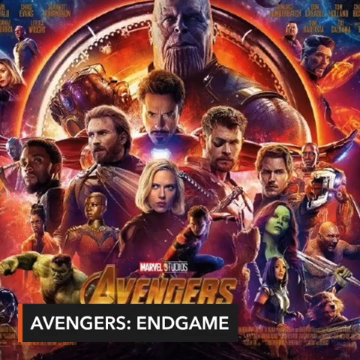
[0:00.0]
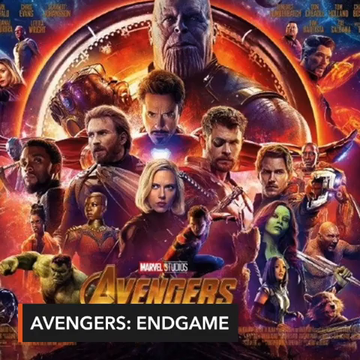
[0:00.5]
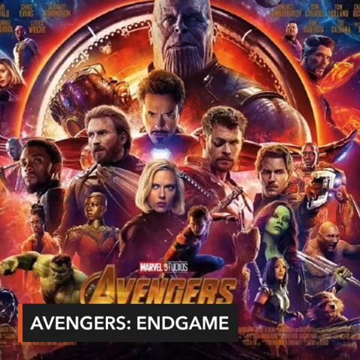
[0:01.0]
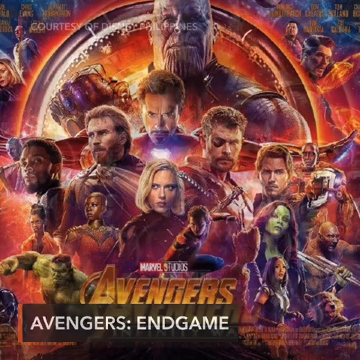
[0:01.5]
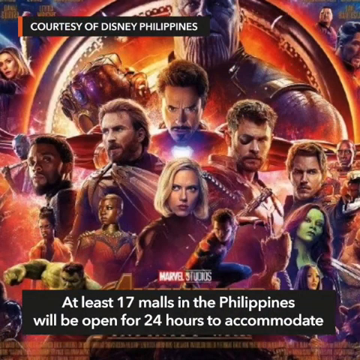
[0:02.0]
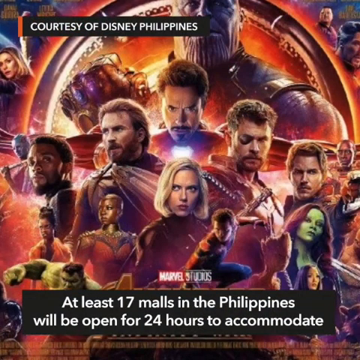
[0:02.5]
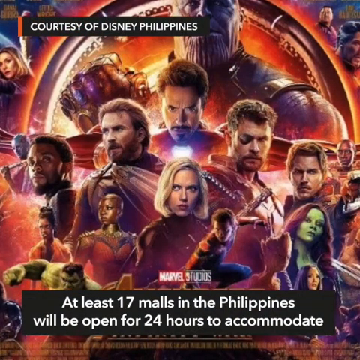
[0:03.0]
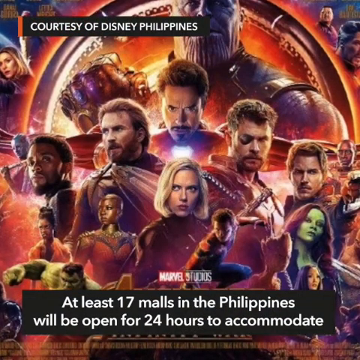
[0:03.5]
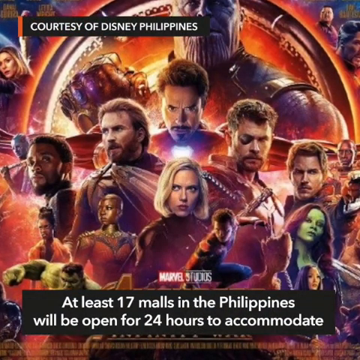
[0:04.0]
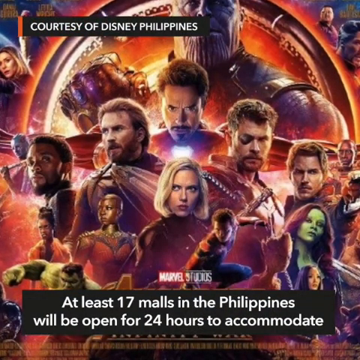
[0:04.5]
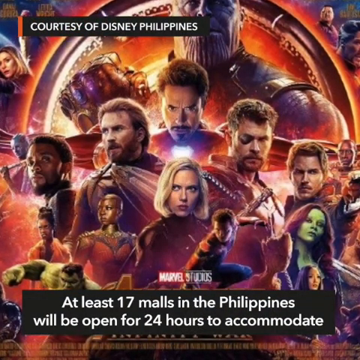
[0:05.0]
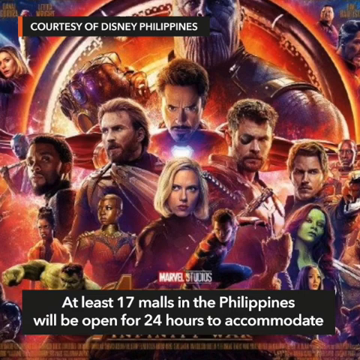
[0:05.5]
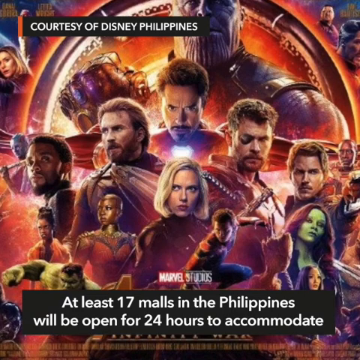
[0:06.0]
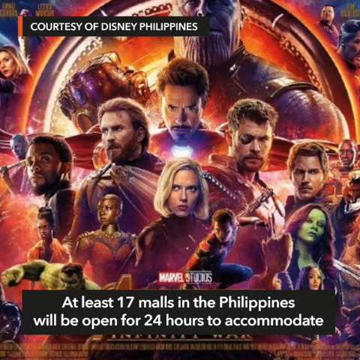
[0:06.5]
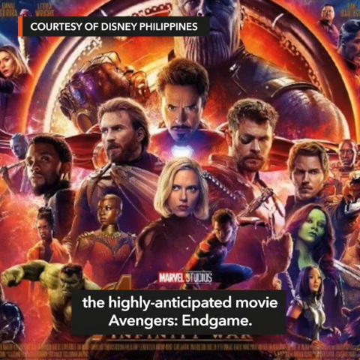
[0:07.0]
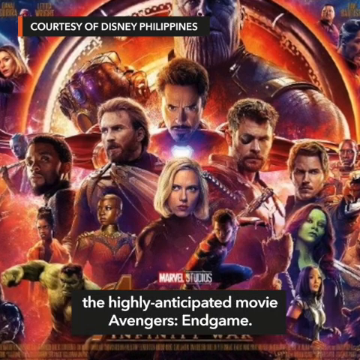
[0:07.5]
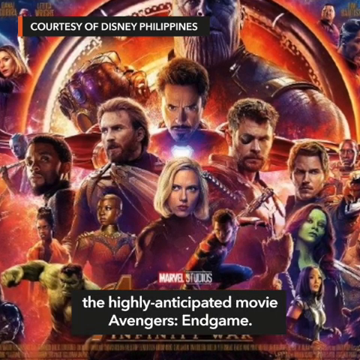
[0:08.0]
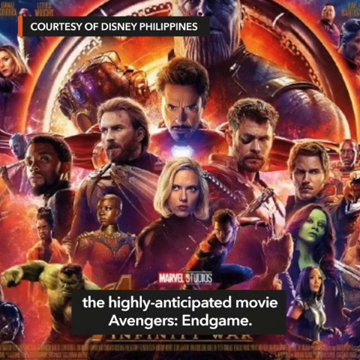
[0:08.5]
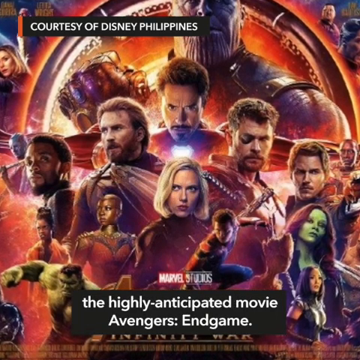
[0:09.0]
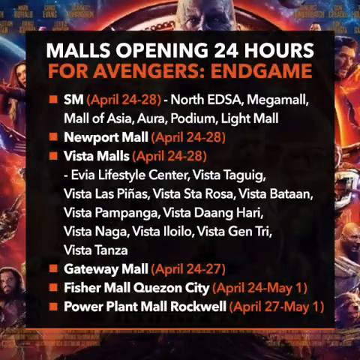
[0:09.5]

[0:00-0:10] The video opens with a screenshot of a movie poster for Avengers Endgame. The poster shows several of the Avengers characters from Marvel, around 20 or so characters in all. Subtitles appear: the first gives the name of the movie, "Avengers: Endgame," and the next states that at least 17 malls in the Philippines will be open for 24 hours to accommodate the highly anticipated movie. The segment ends with a screenshot of a few of the malls that will be open for the movie.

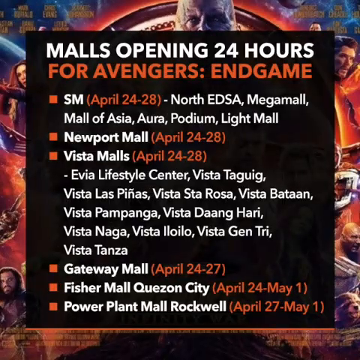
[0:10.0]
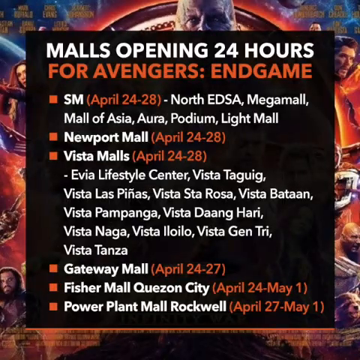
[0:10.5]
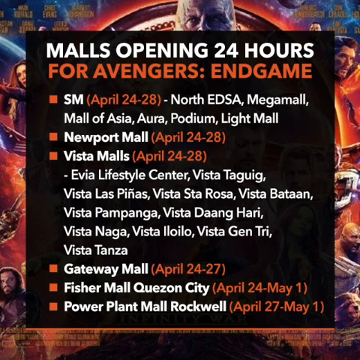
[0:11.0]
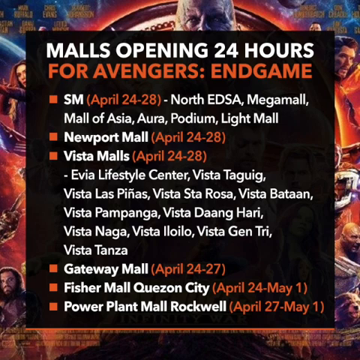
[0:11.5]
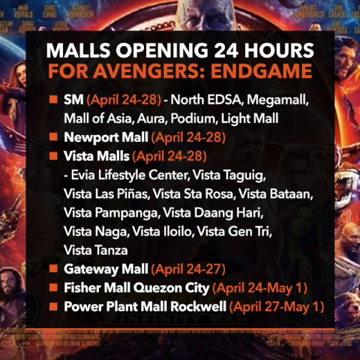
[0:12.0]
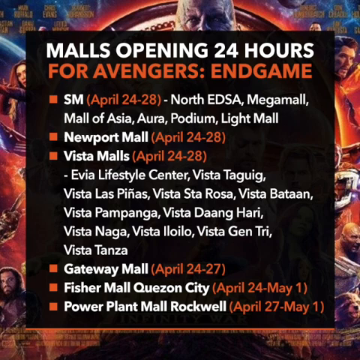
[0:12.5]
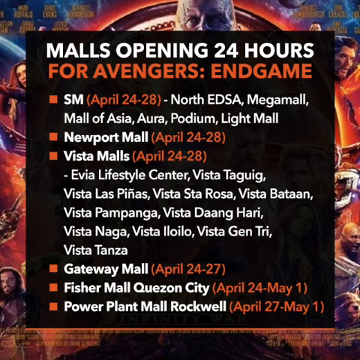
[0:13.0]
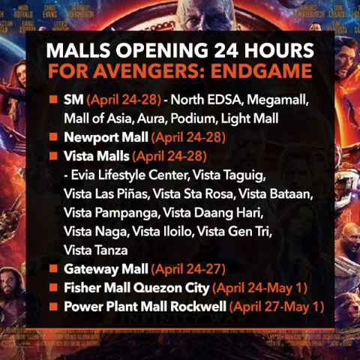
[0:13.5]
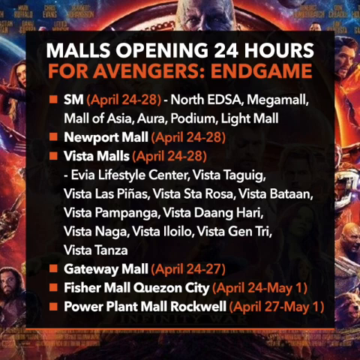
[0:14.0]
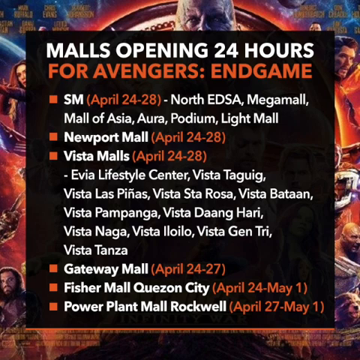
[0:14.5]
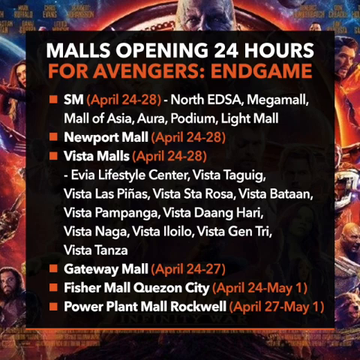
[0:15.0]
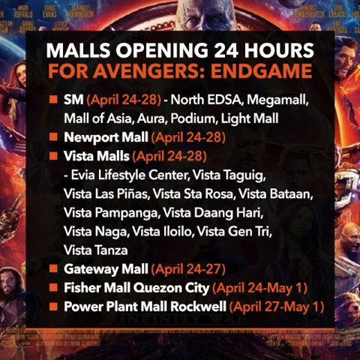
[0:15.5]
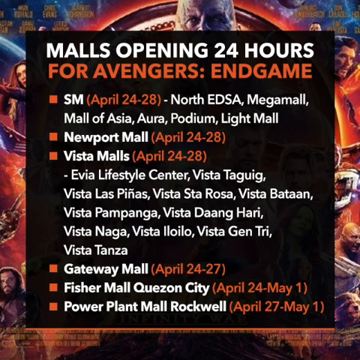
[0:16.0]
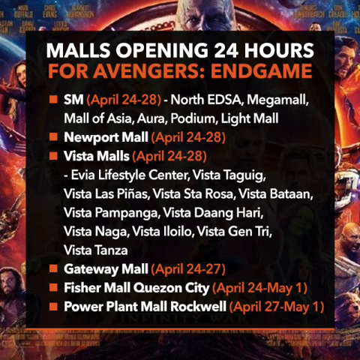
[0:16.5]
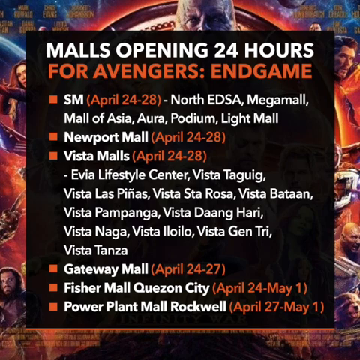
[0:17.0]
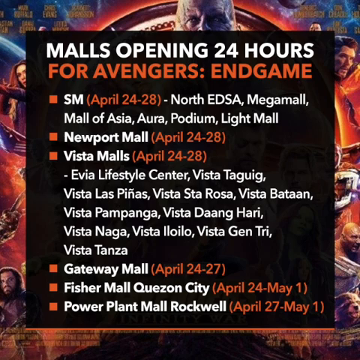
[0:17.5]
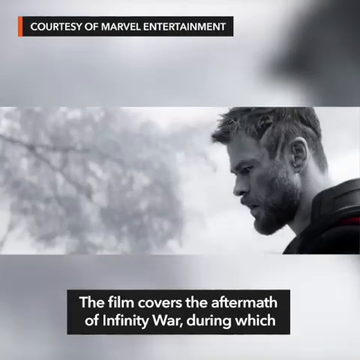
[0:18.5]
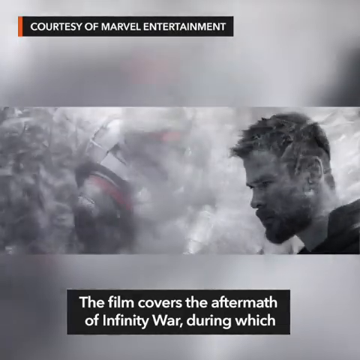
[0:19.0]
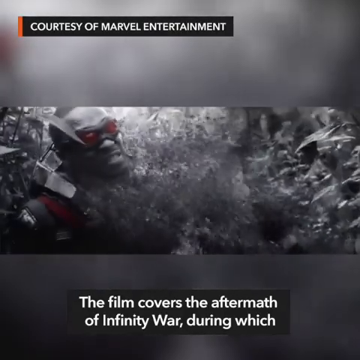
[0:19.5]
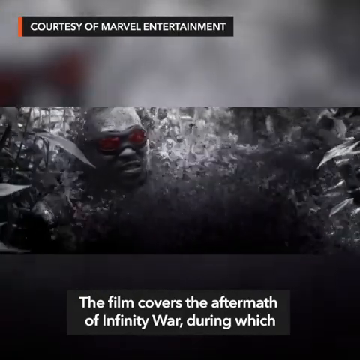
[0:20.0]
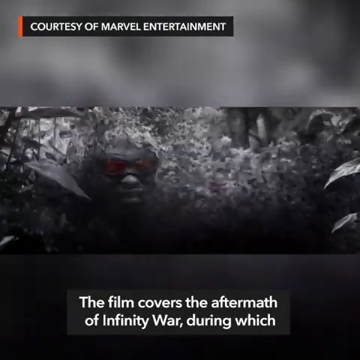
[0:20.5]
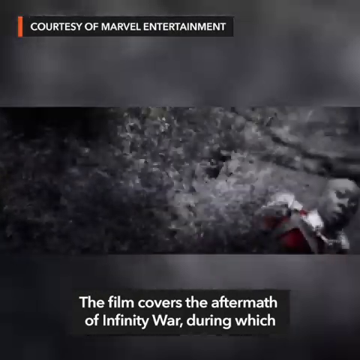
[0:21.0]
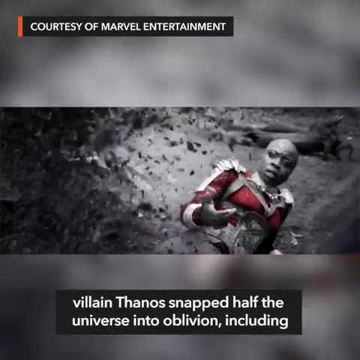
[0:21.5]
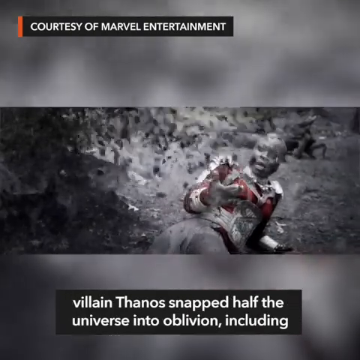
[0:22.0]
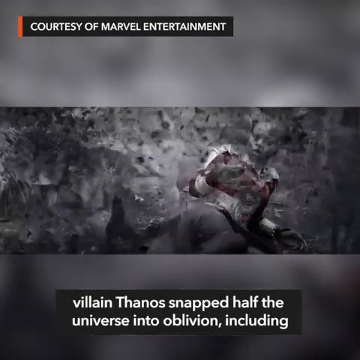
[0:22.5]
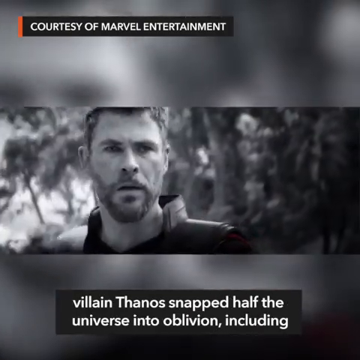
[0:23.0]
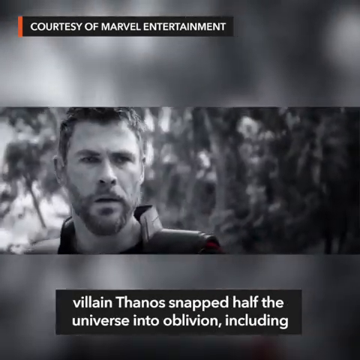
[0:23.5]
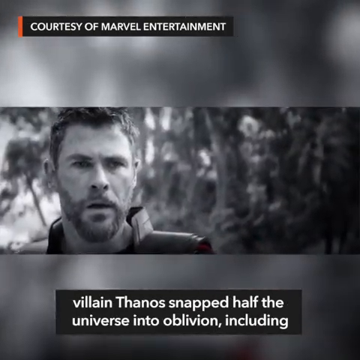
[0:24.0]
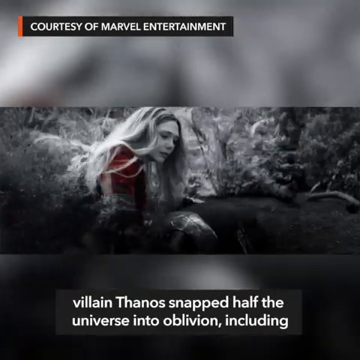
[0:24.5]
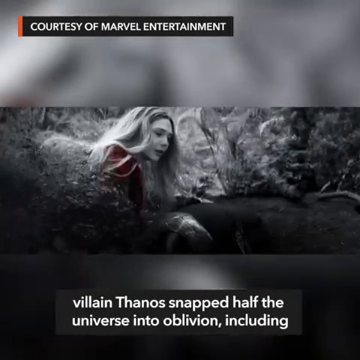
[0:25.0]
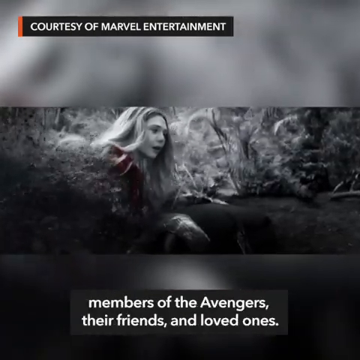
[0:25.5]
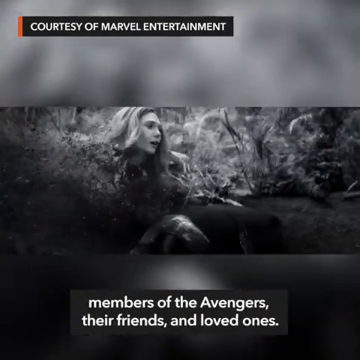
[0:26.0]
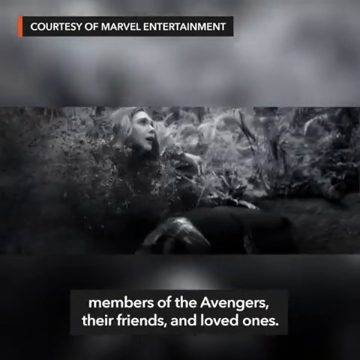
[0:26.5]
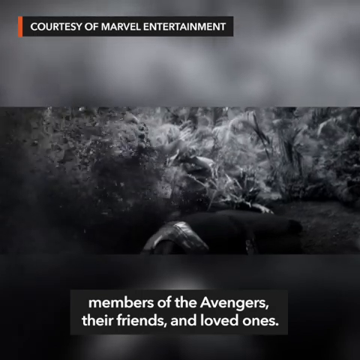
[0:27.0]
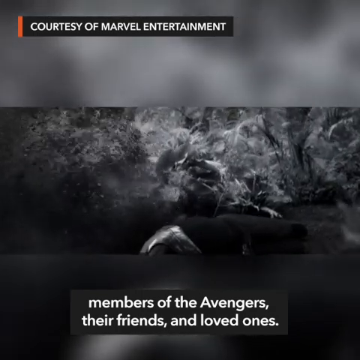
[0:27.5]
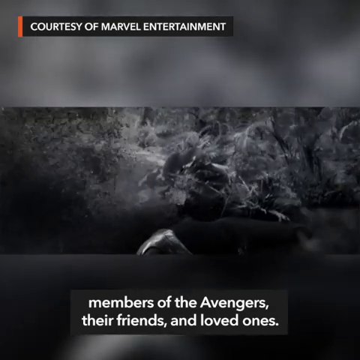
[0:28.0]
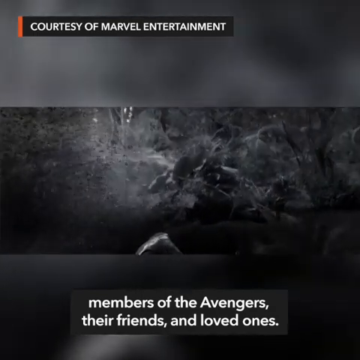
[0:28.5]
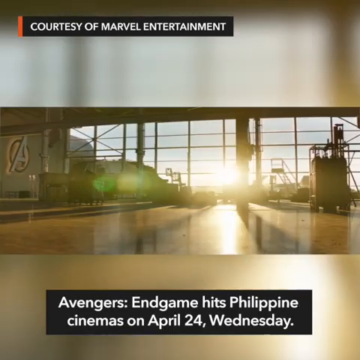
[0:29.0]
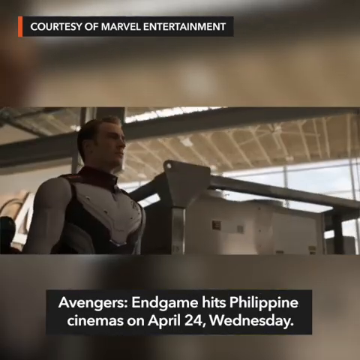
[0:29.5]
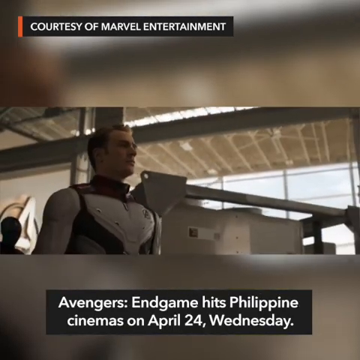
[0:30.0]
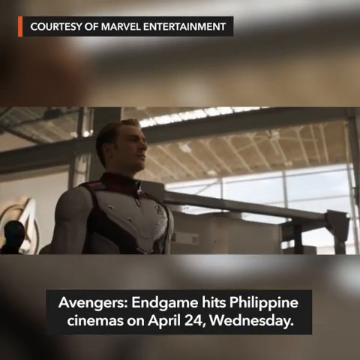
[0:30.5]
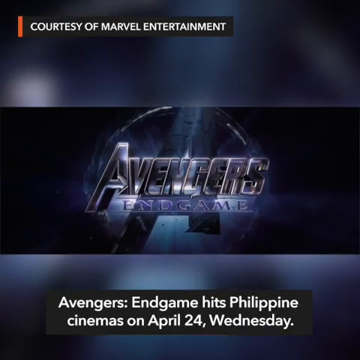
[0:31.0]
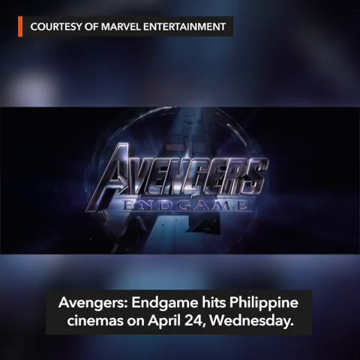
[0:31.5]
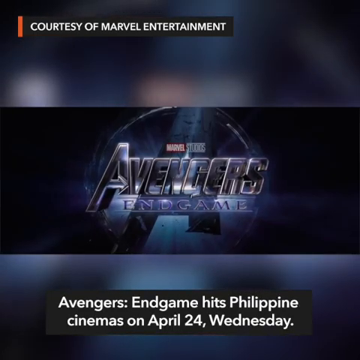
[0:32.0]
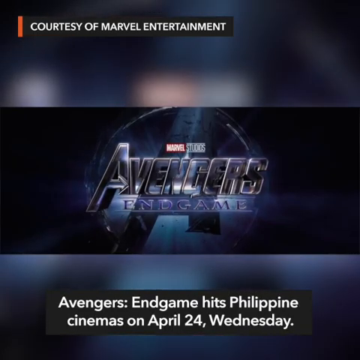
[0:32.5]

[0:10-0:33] A screenshot lists malls that will be open for 24 hours for the screening of the new movie Avengers Endgame. Among the malls listed are SM North, EDSA, Mega Mall, Mall of Asia, Newport Mall, Vista Malls, Gateway Mall, and others. Six mall groups are listed, with dates next to them stating when they will be open 24 hours. After the screenshot comes a movie clip filmed mostly in black and white with some touches of red, showing different Avenger characters disintegrating and breaking into pieces from something. Subtitles state that the film covers the aftermath of Infinity War, during which the villain Thanos snapped half the universe into oblivion, including members of the Avengers, their friends and loved ones, and that the movie will hit theaters on April 24th.